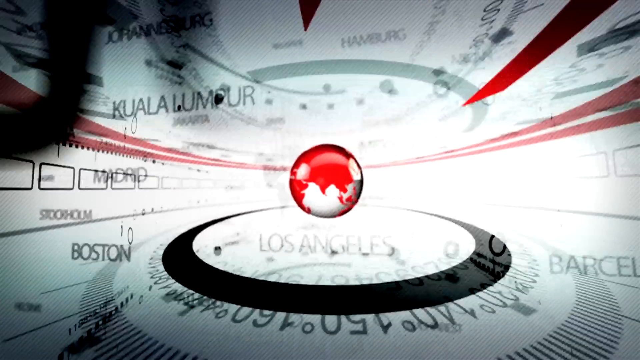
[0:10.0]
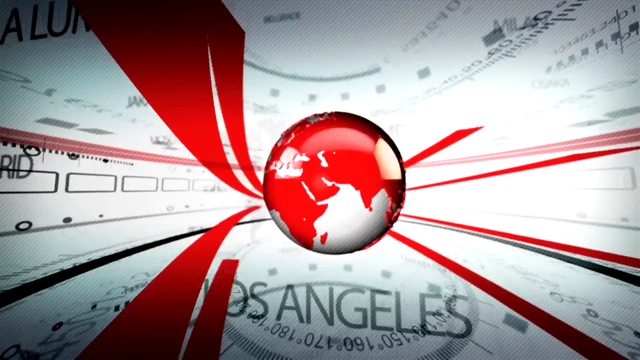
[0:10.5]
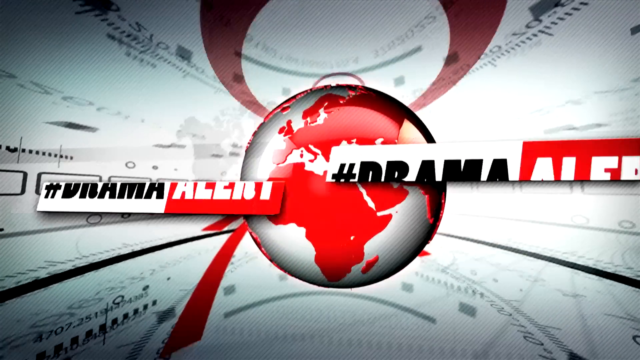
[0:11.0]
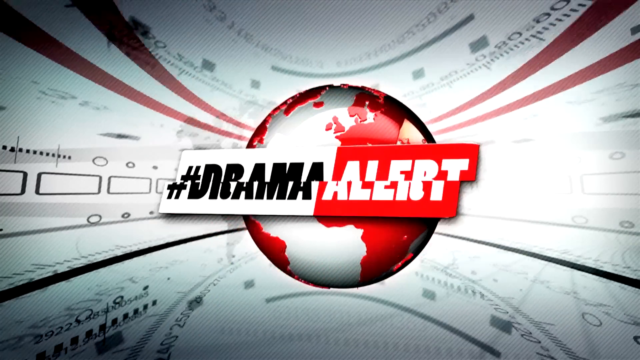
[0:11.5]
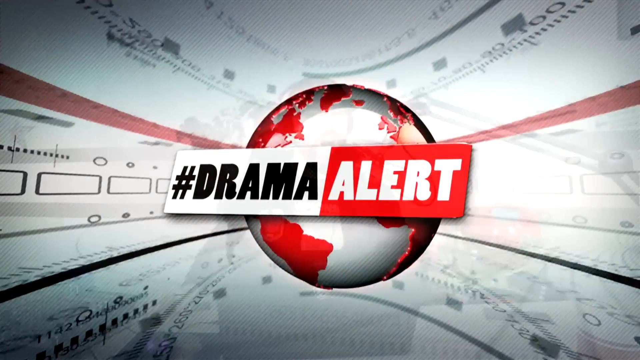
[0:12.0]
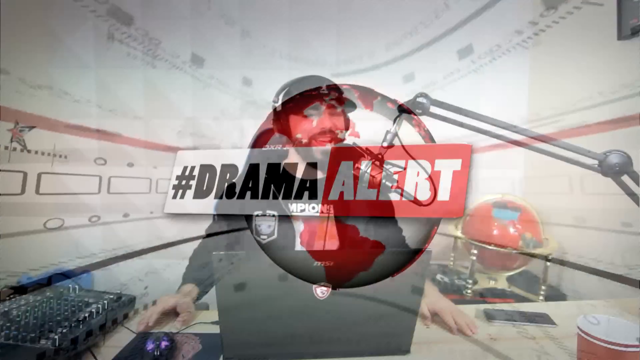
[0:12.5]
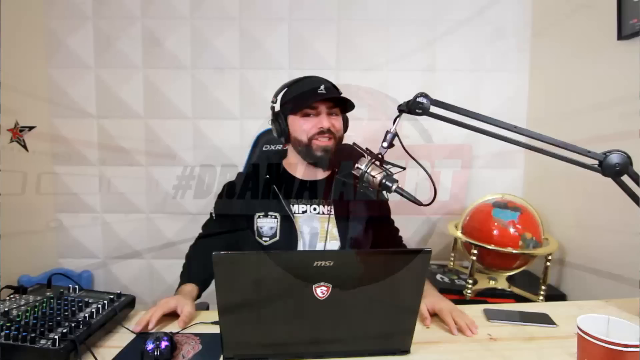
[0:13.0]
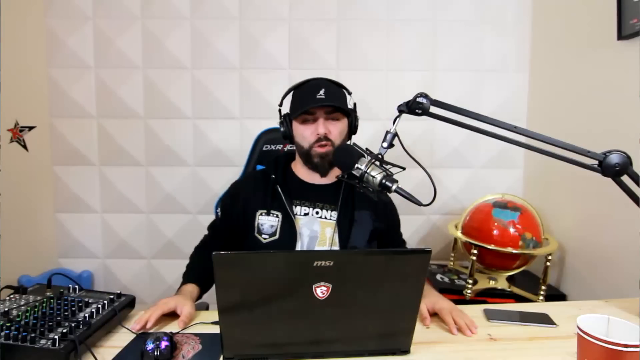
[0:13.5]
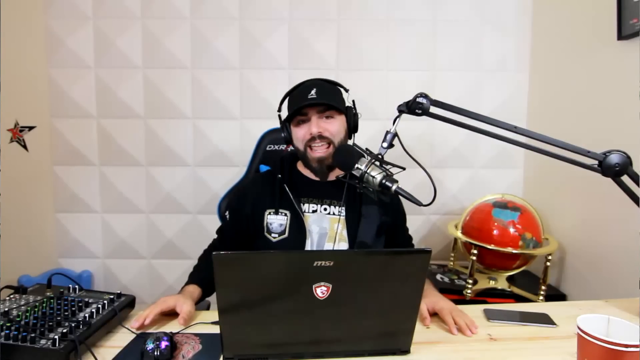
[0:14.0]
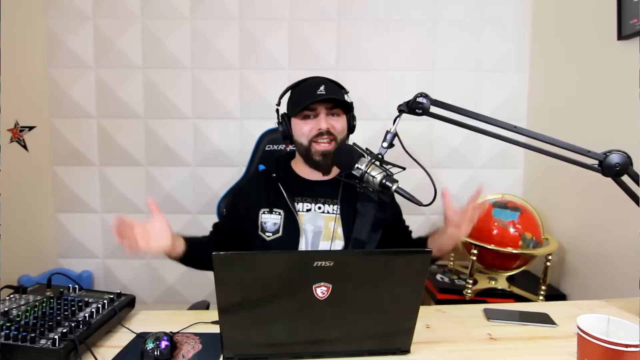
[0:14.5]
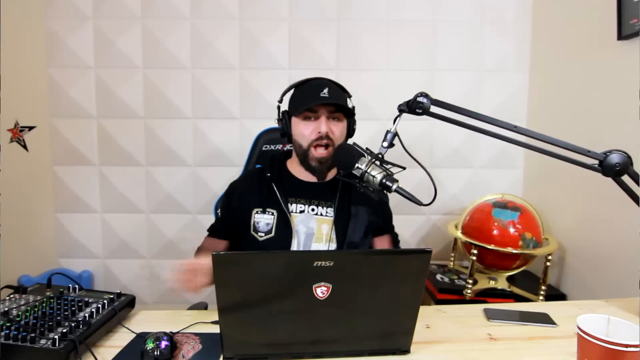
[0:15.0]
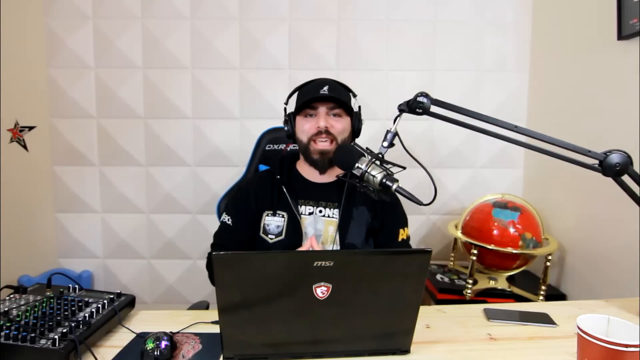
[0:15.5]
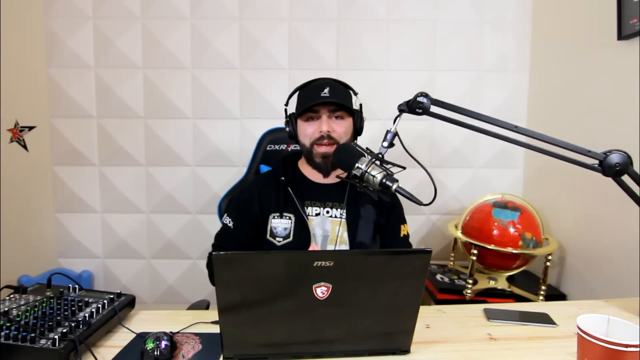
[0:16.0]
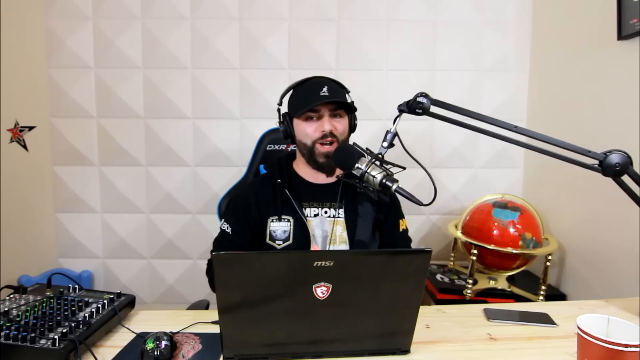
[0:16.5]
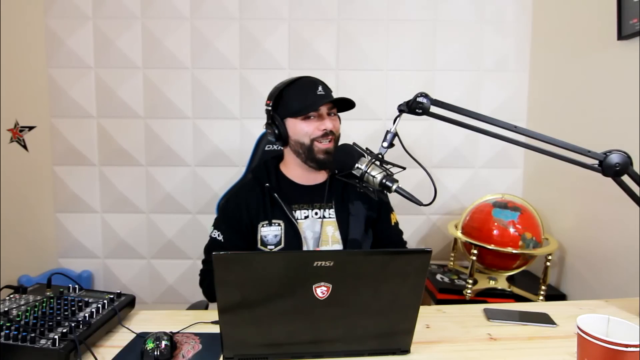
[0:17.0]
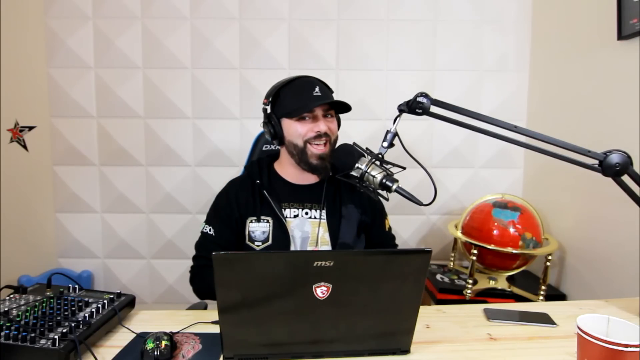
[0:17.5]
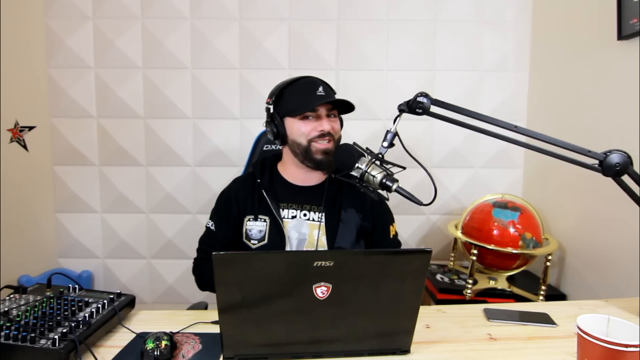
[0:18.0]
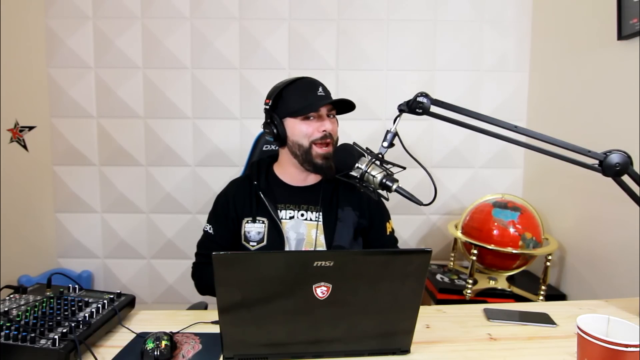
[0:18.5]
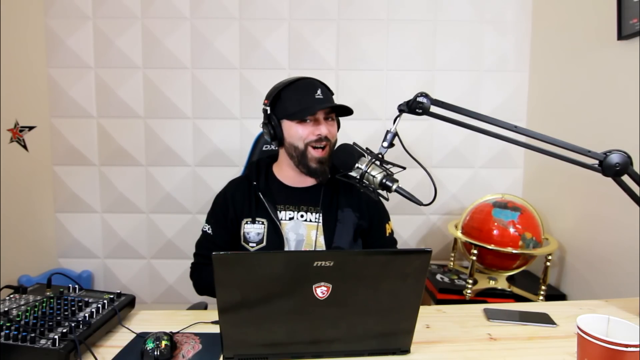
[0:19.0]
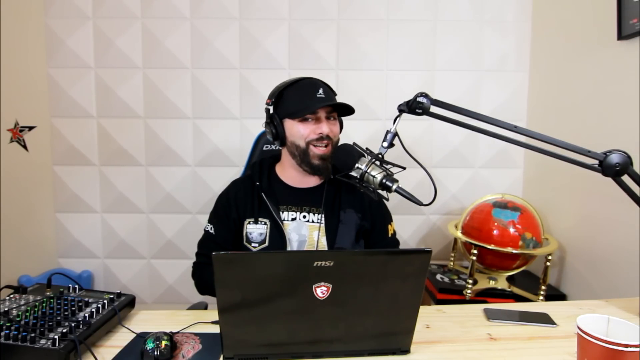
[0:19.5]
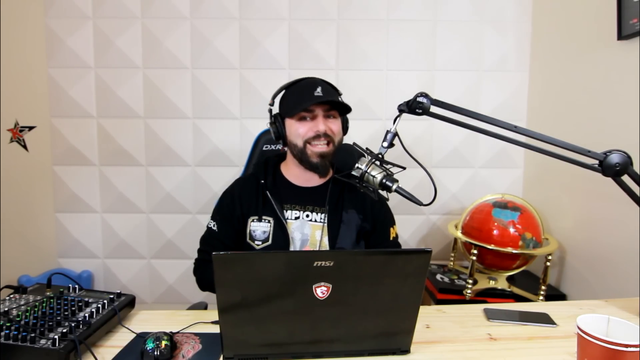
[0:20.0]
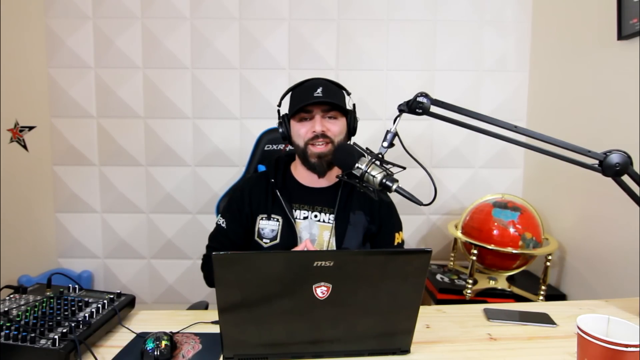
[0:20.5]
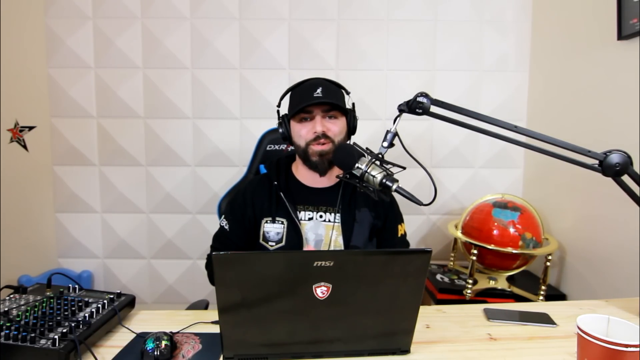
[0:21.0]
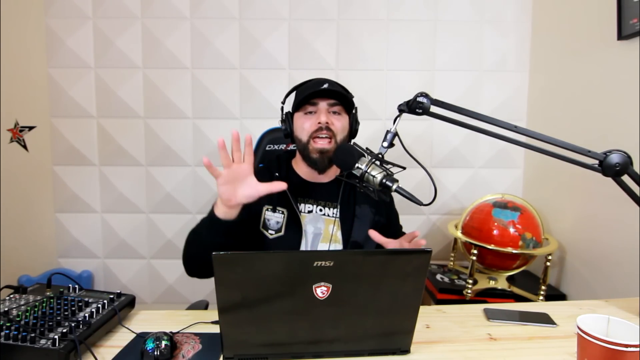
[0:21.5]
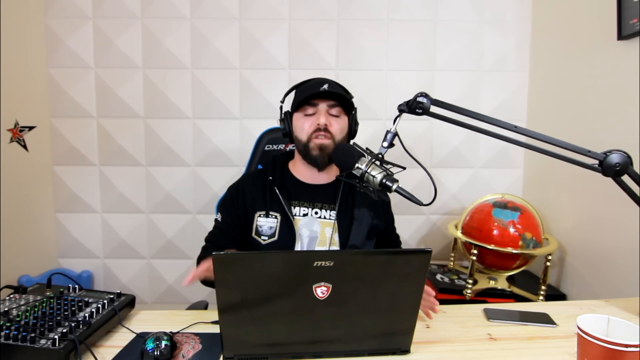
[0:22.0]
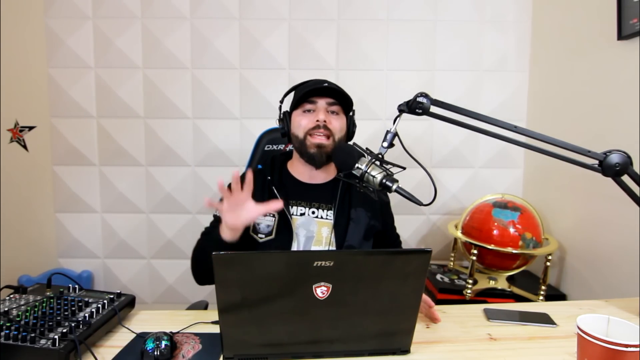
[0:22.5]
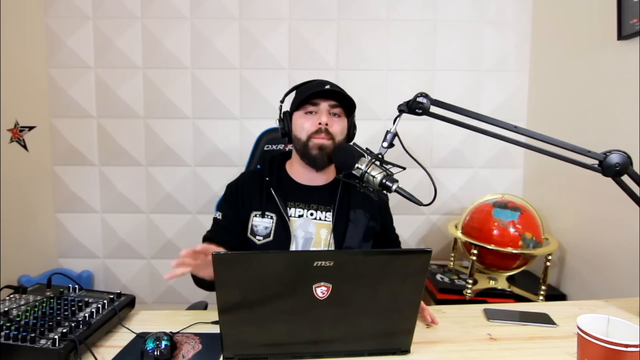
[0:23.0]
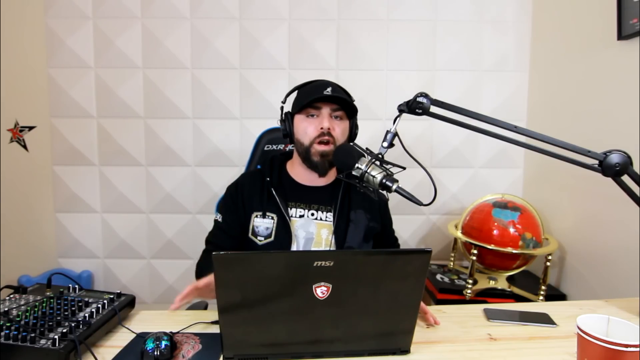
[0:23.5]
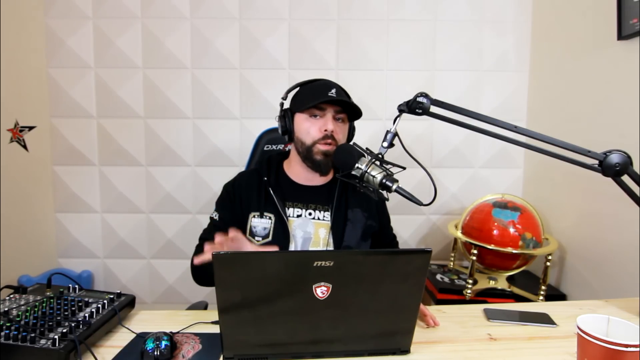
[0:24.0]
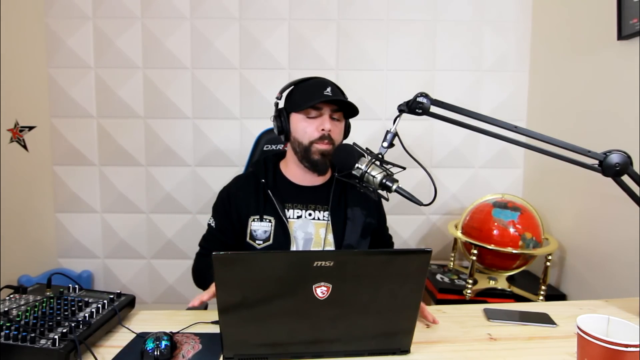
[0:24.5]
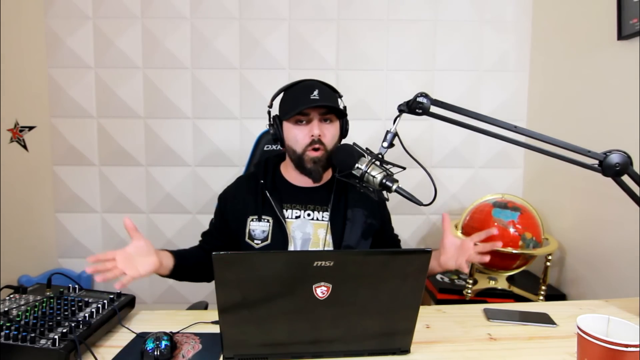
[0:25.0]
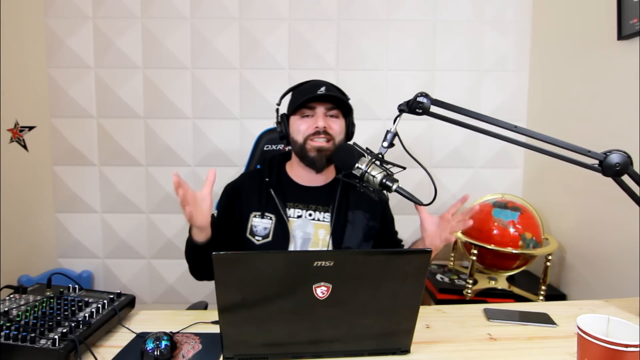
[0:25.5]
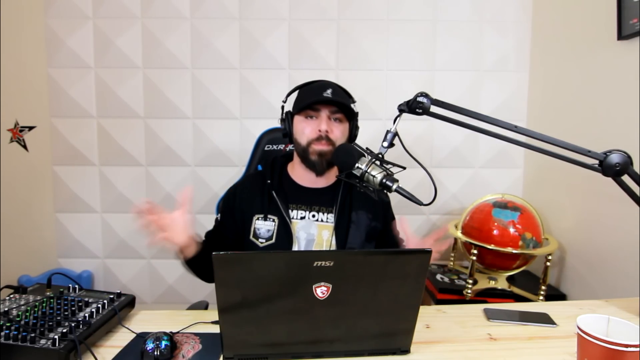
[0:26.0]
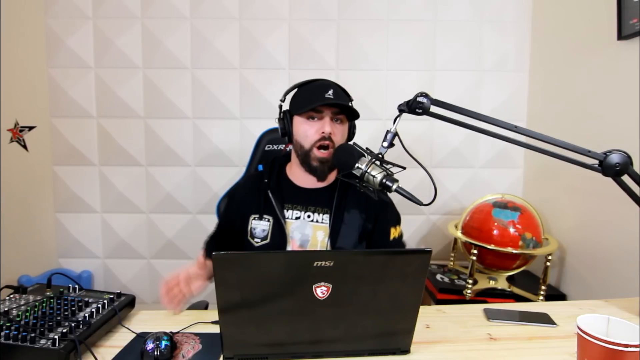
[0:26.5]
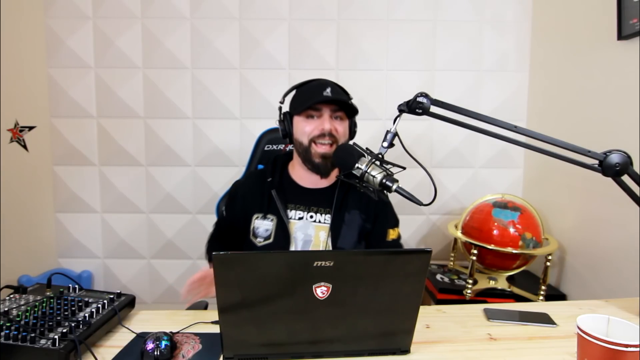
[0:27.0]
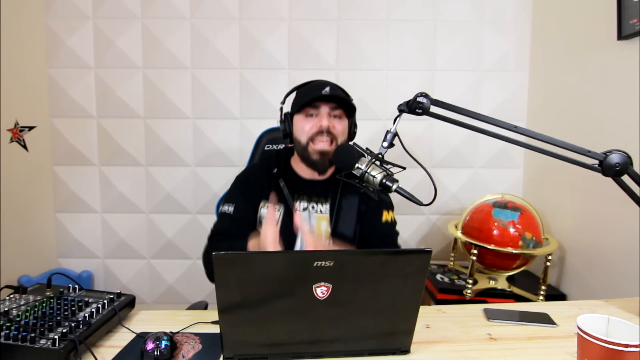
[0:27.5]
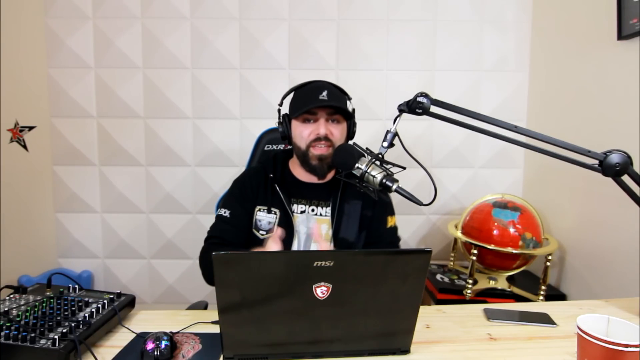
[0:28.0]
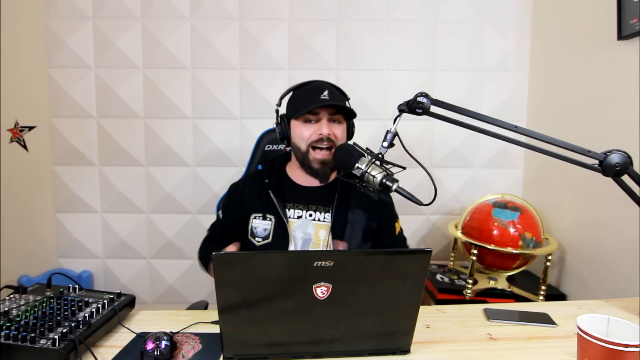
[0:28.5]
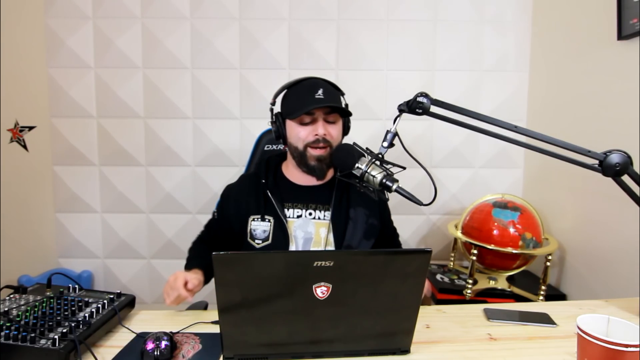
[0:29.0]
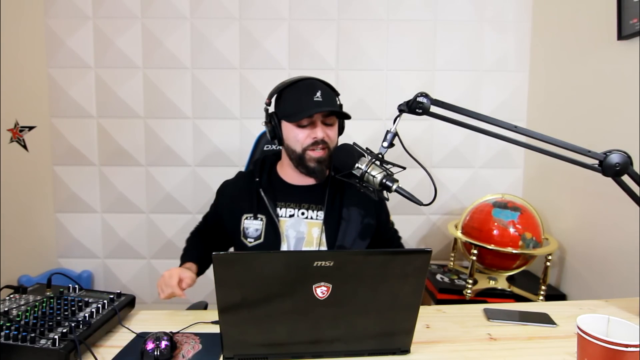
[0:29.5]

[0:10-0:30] The beginning of the YouTube channel logo shows the same Earth as before. Then a man appears talking into a microphone. He is a white man with a heavy beard and mustache, wearing a black hat, a black Raiders jacket and a black t-shirt. The word "champion" appears to be written on the upper right side of his jacket. He is sitting at a desk with a computer. To the right of the video there is a globe on a table; the globe is red and sits inside a gold frame. Some type of keyboard is to the left of the man on the desk. His cell phone is on the right, and two red cups stacked within one another are in the bottom right corner. The table he sits at is a very light brown wooden table.